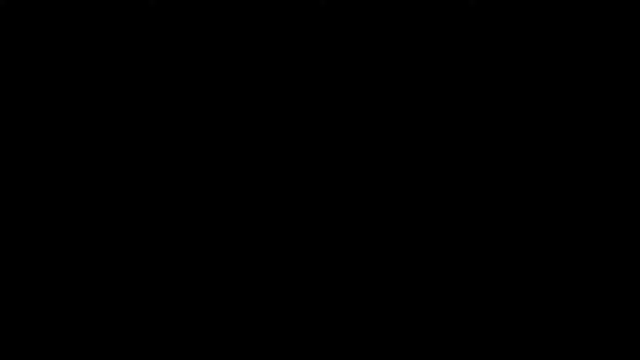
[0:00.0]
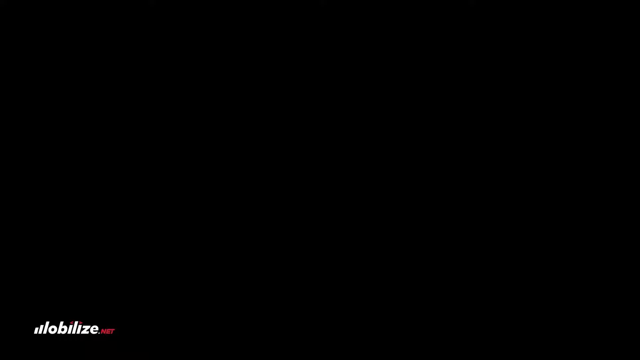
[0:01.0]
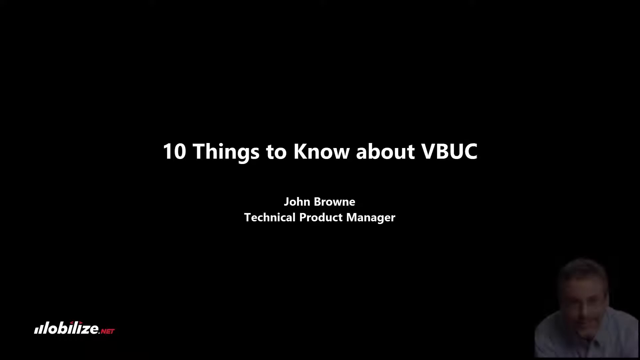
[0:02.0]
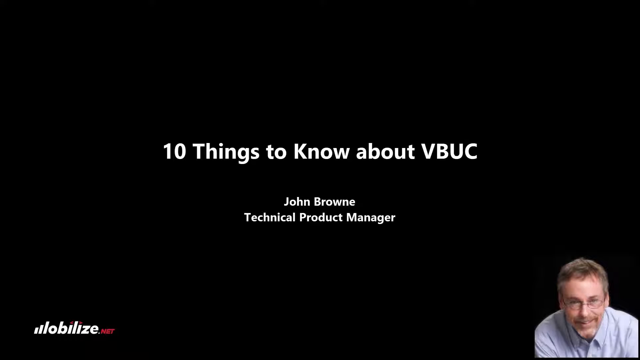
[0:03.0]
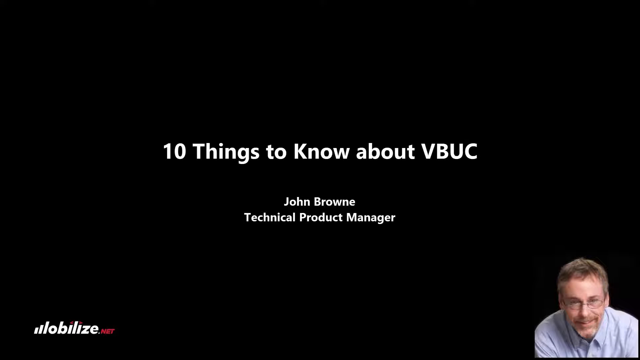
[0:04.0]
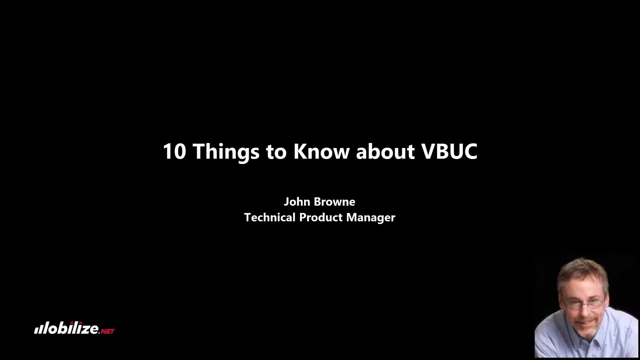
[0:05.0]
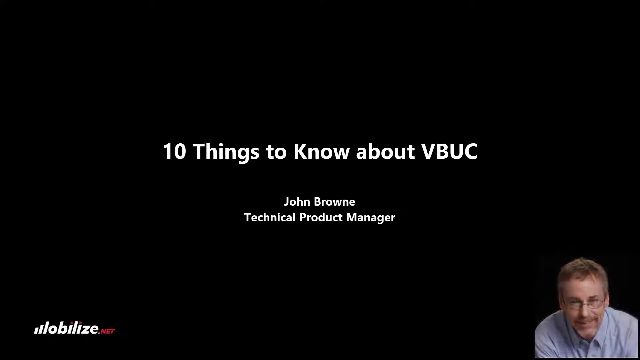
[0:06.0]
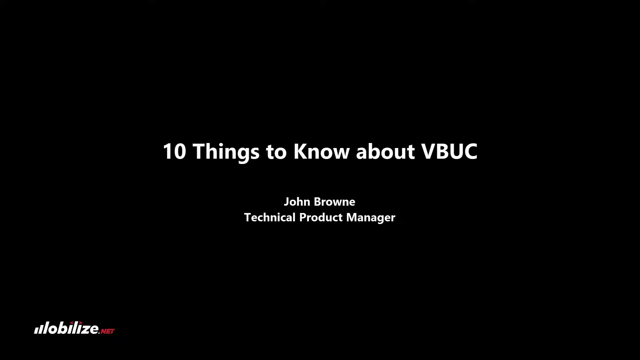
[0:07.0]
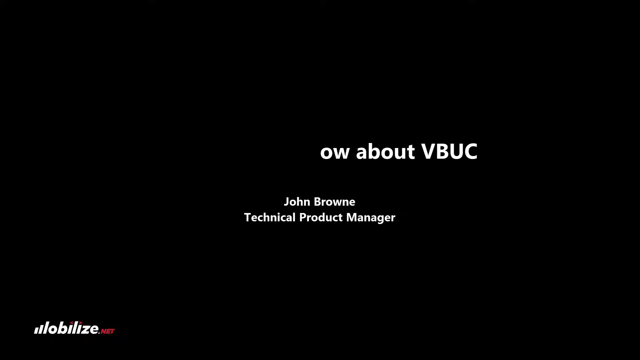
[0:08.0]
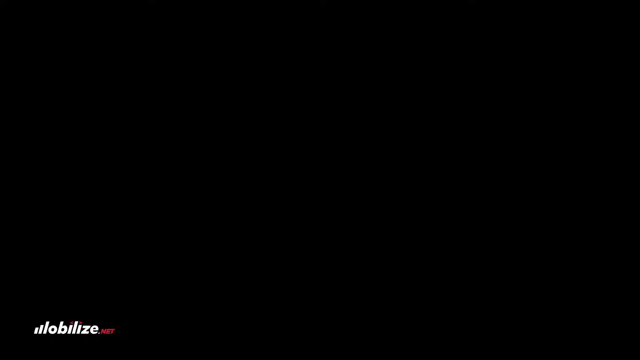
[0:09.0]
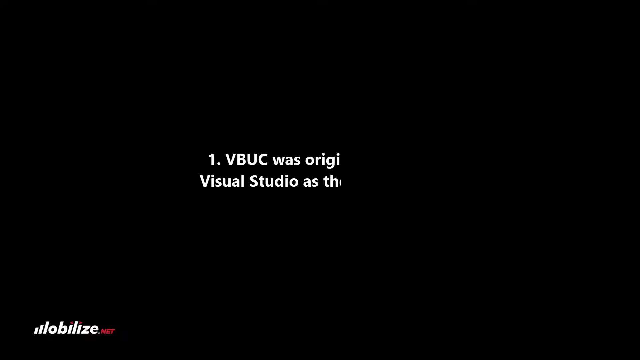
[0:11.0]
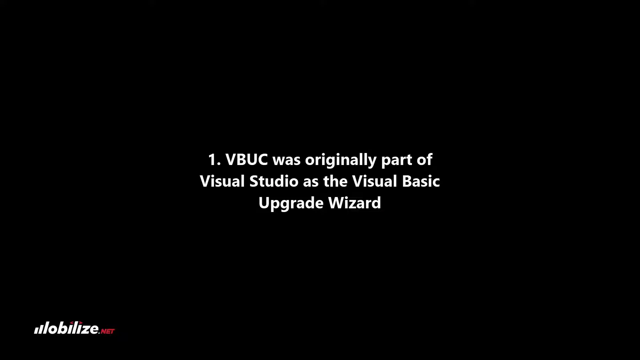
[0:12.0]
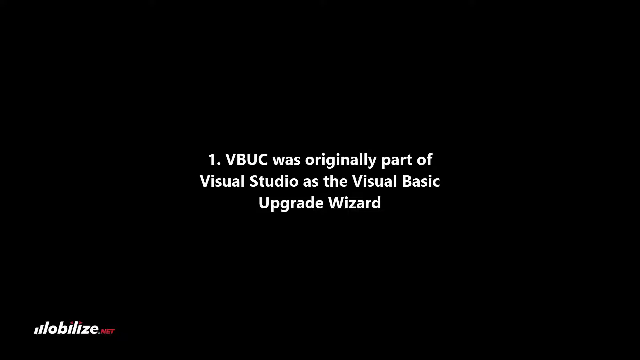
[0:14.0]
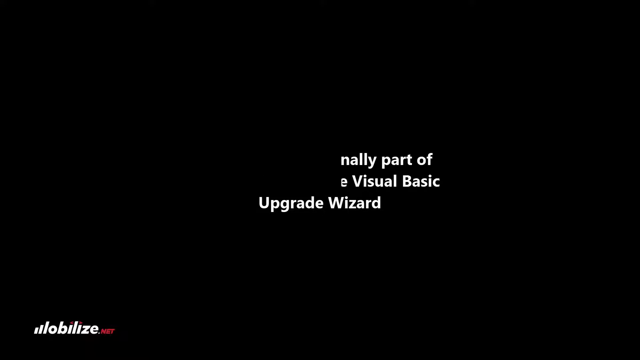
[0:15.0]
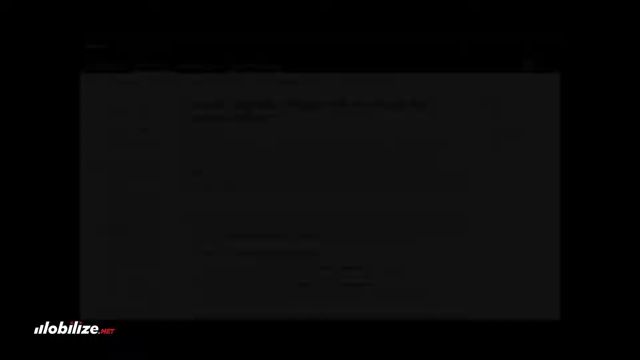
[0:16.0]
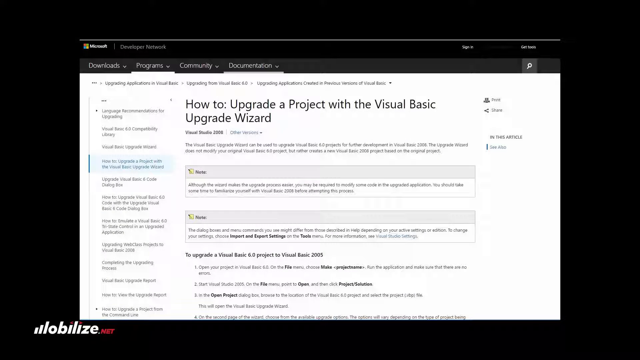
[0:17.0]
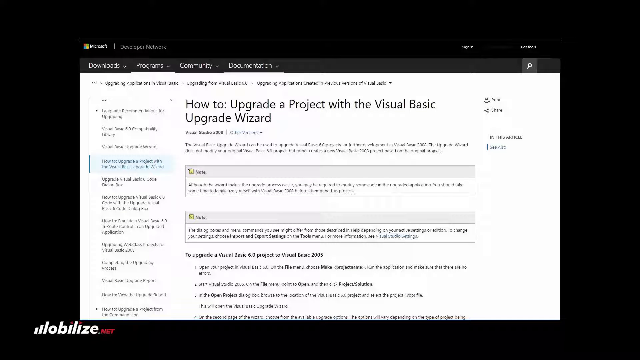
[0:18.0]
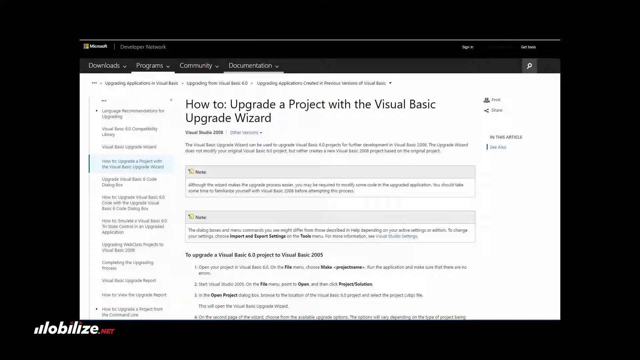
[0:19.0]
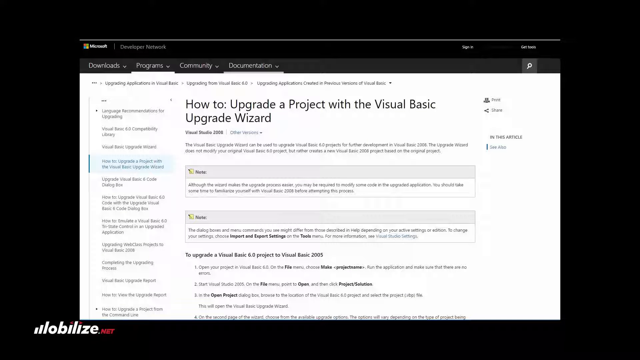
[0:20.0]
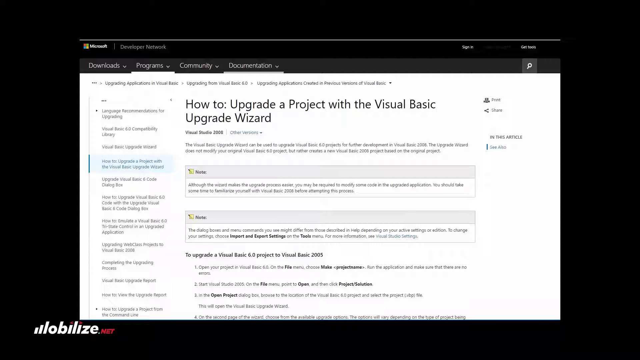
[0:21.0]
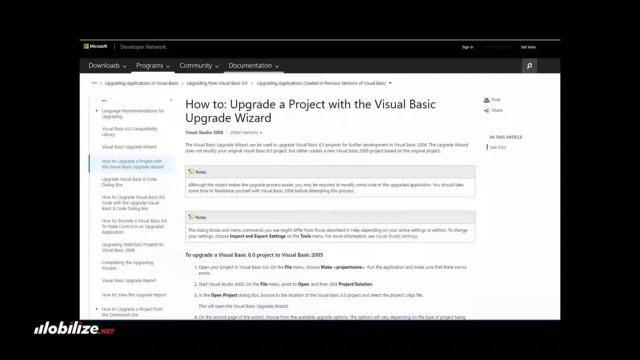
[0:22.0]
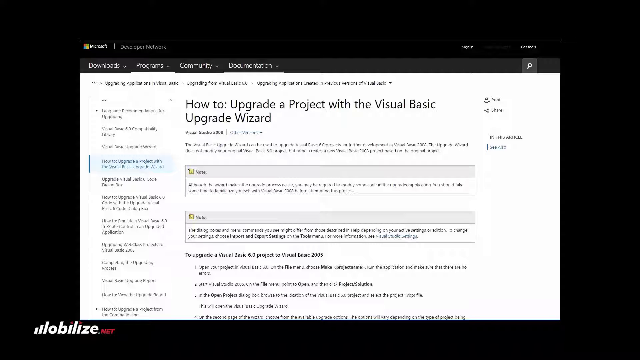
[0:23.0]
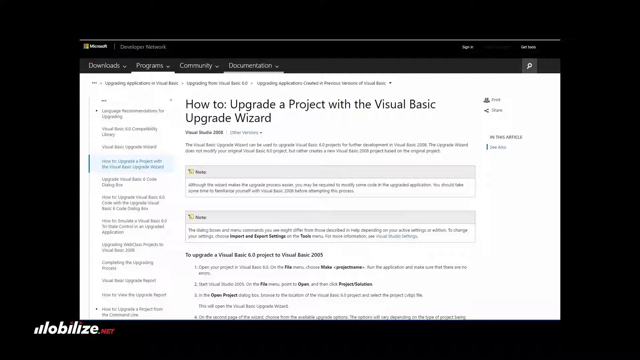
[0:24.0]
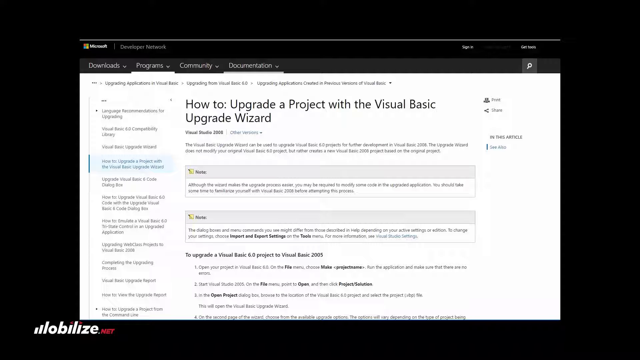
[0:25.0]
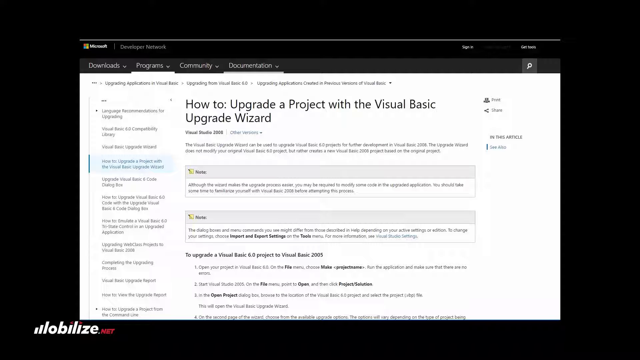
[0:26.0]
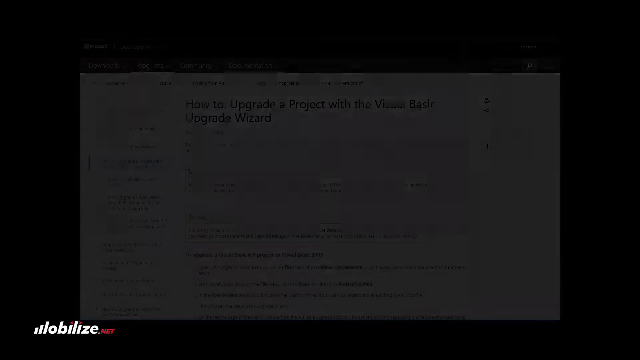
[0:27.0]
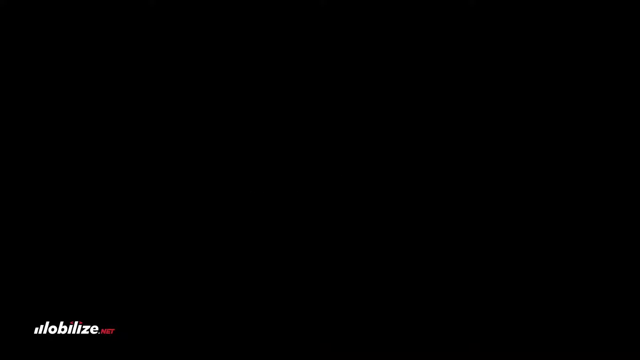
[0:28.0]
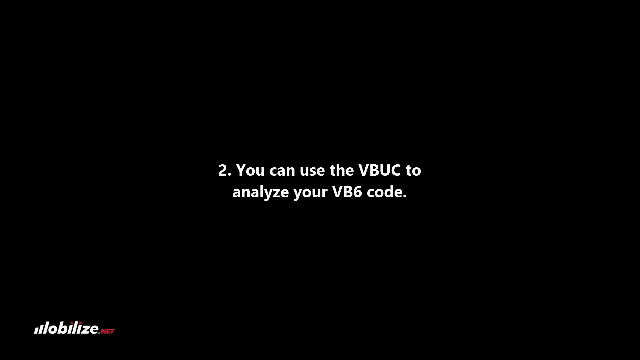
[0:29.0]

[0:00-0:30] On a blank black screen, writing appears. In the bottom corner it says "Globalize," and in the center appears "10 things to know about VBUC. John Brown, technical product manager." An image of a man, presumably John Brown, showing his face and shoulders, is in the bottom right-hand corner of the screen. This disappears, and the presentation takes a form somewhat like a PowerPoint. White writing then appears: "Number 1, VBUC was originally part of Visual Studio as the Visual Basic Upgrade Wizard." The writing disappears and an image of a computer screen appears, showing a webpage that reads at the top "how to upgrade a project with Visual Basic Upgrade Wizard," with information following it. The image stays for a little while, then fades out, and writing appears in the center of the screen: "Number two, you can use the VBUC to analyze your VB6 code." This writing disappears, leaving a plain black screen.